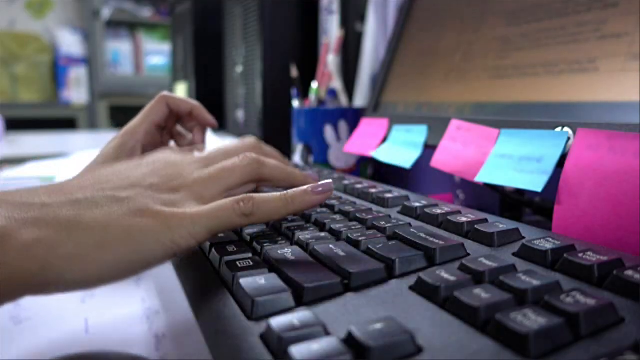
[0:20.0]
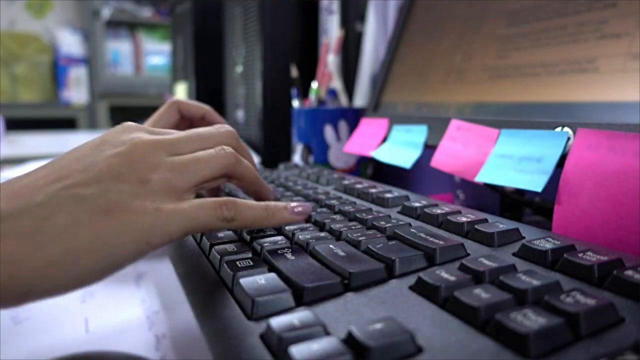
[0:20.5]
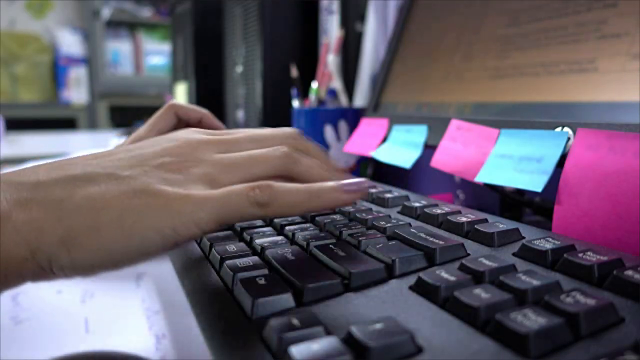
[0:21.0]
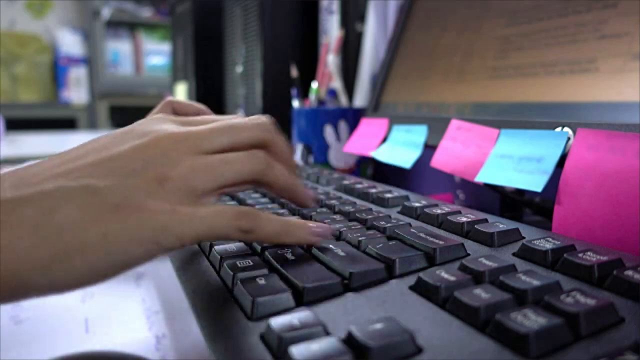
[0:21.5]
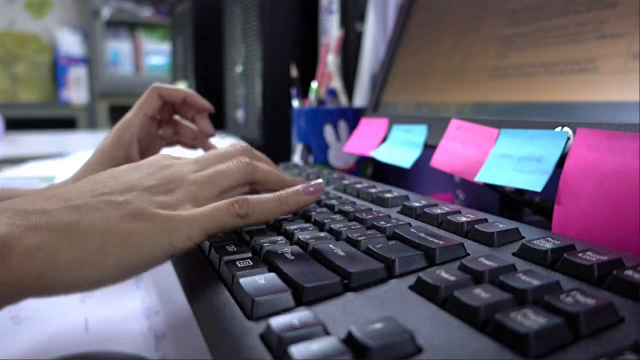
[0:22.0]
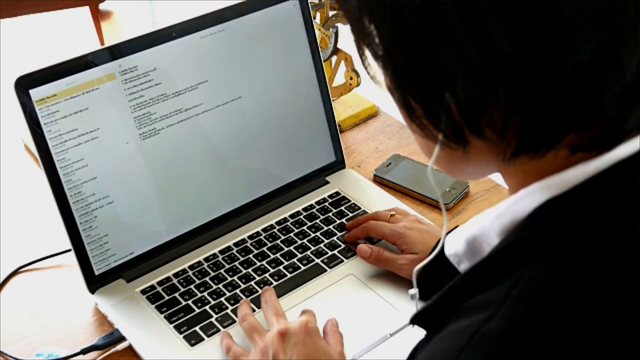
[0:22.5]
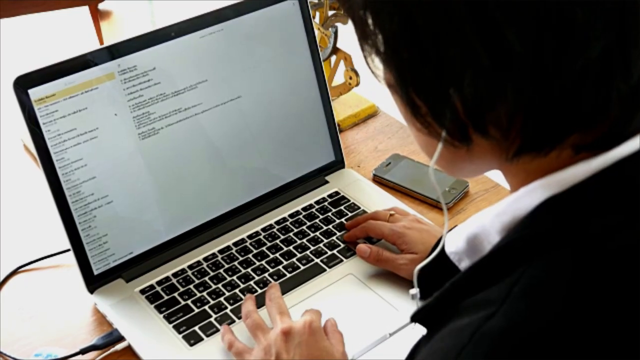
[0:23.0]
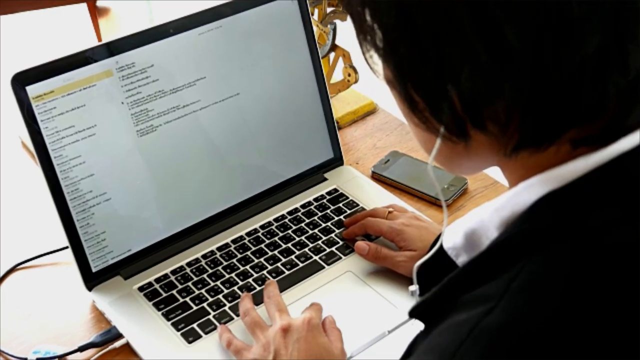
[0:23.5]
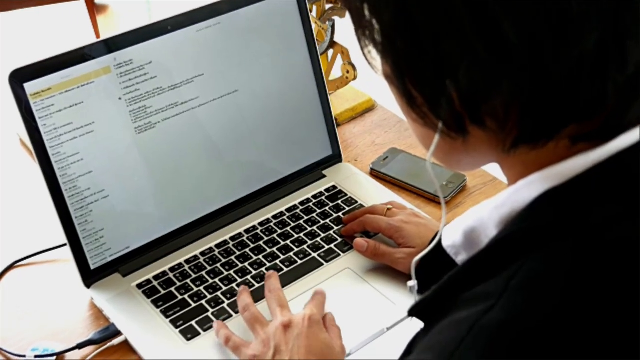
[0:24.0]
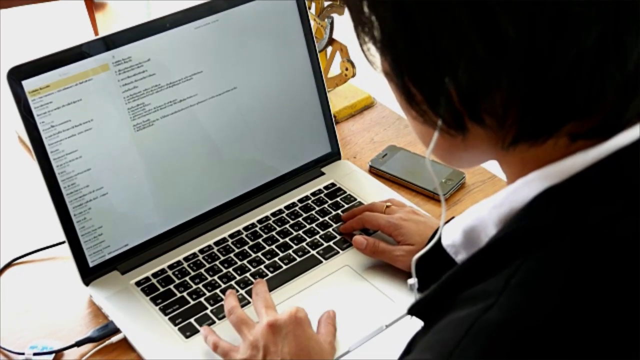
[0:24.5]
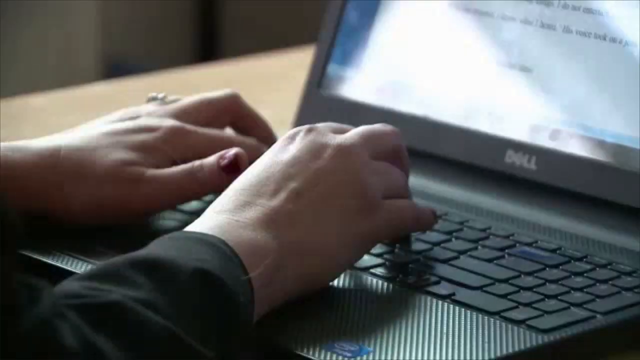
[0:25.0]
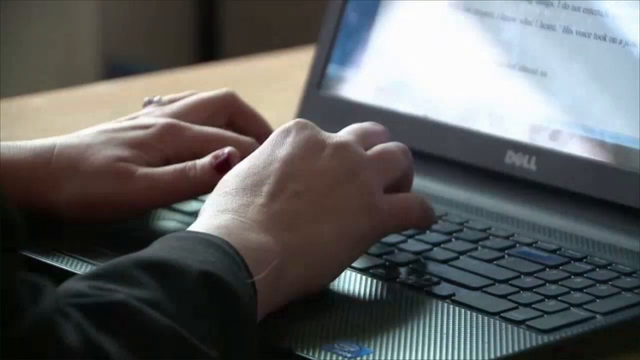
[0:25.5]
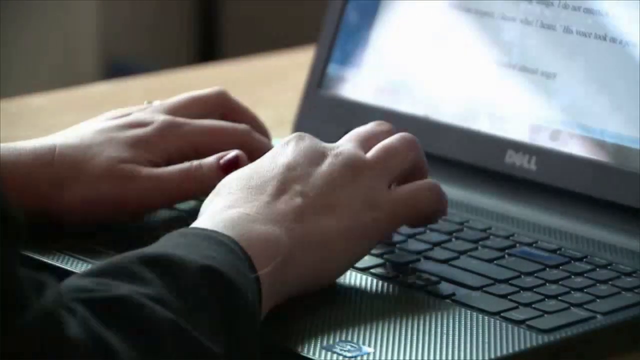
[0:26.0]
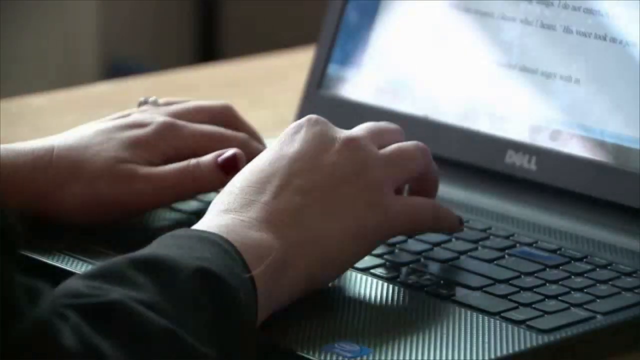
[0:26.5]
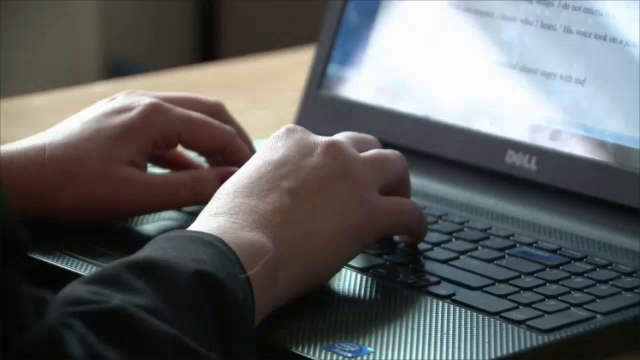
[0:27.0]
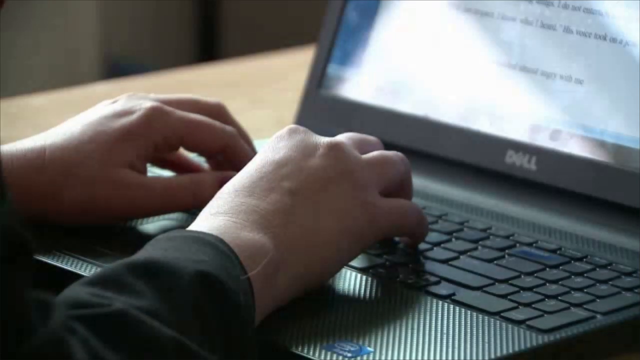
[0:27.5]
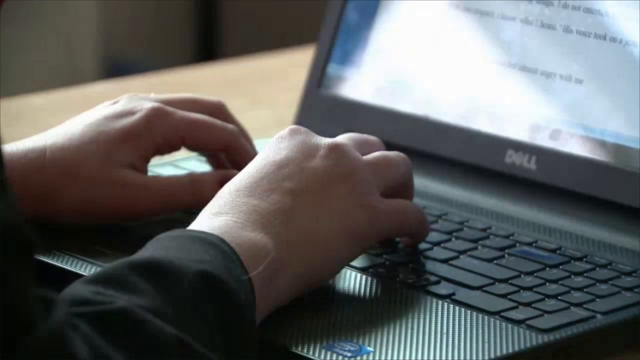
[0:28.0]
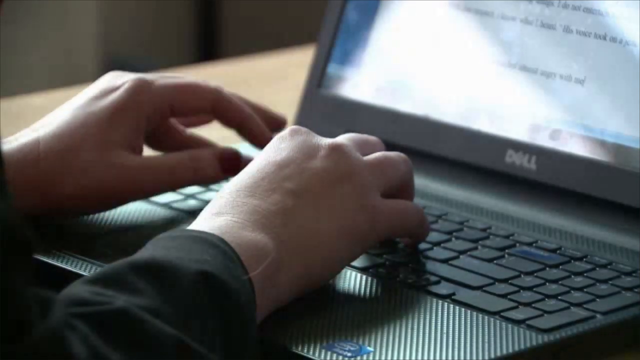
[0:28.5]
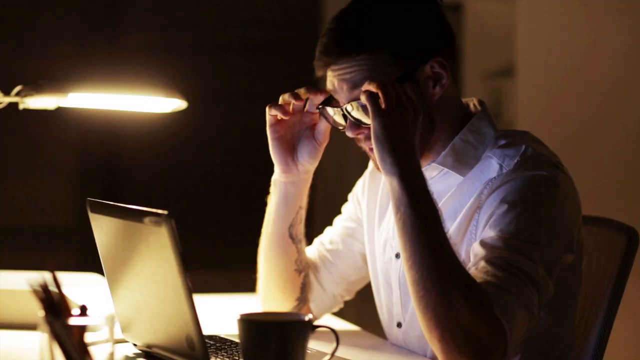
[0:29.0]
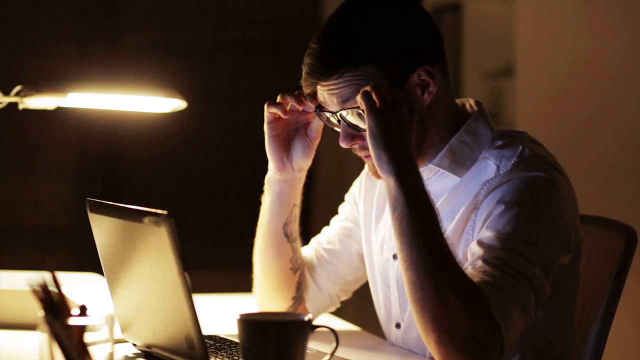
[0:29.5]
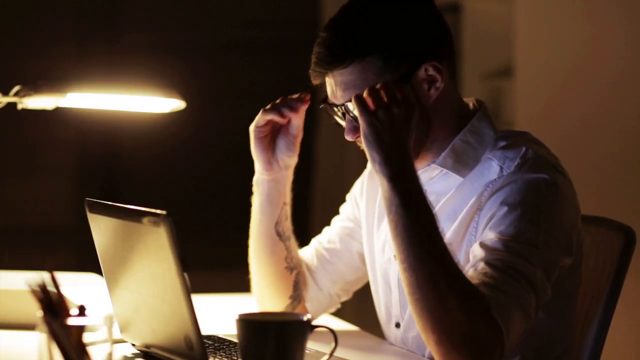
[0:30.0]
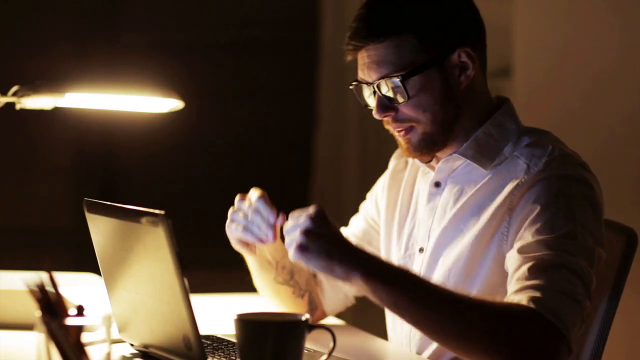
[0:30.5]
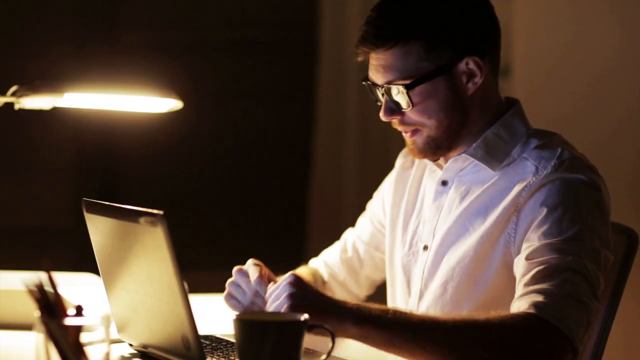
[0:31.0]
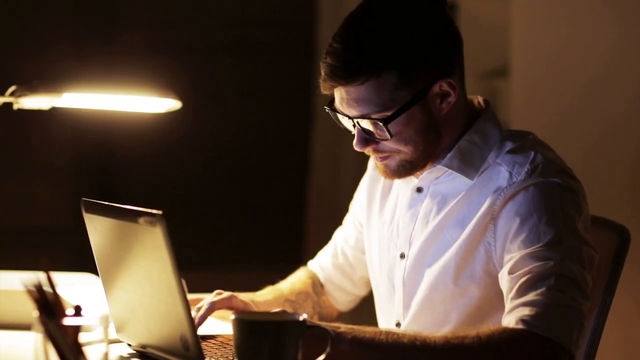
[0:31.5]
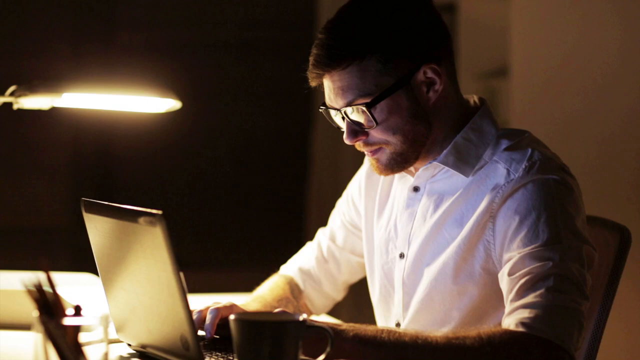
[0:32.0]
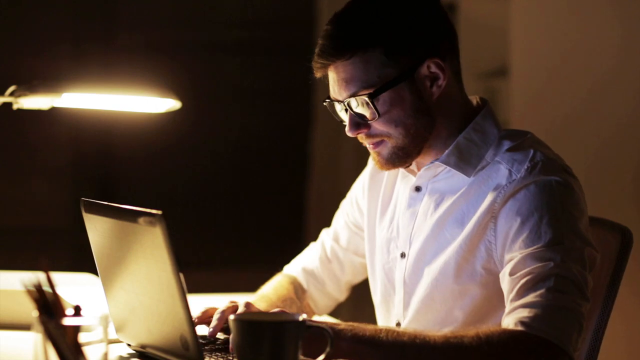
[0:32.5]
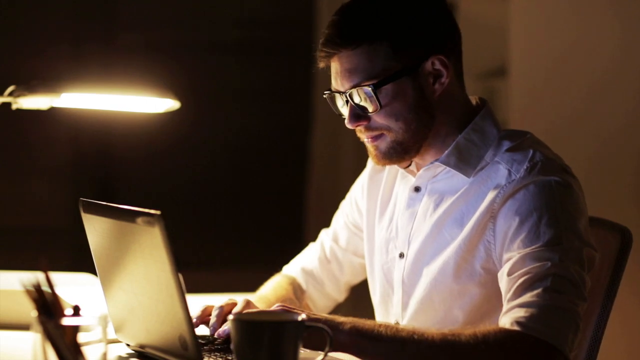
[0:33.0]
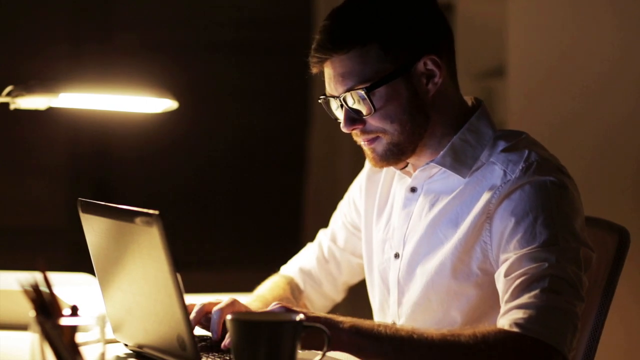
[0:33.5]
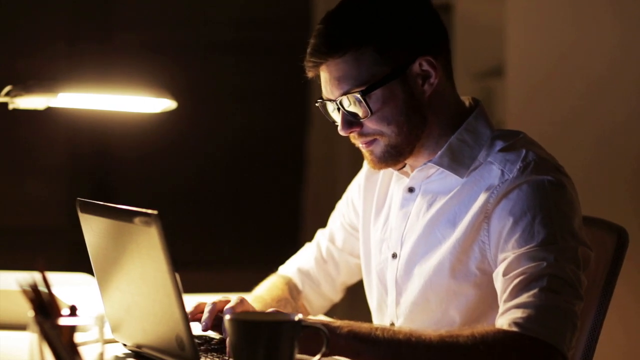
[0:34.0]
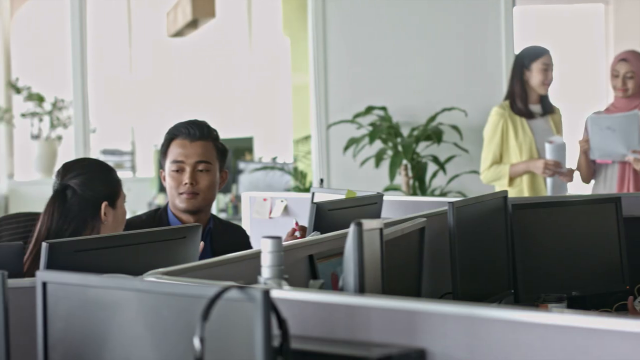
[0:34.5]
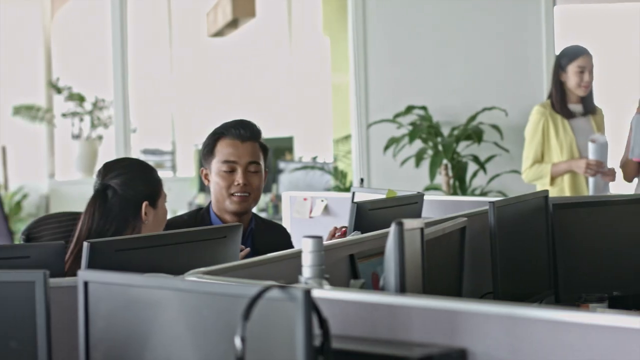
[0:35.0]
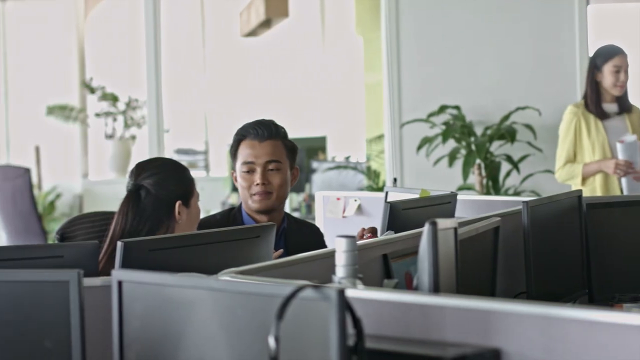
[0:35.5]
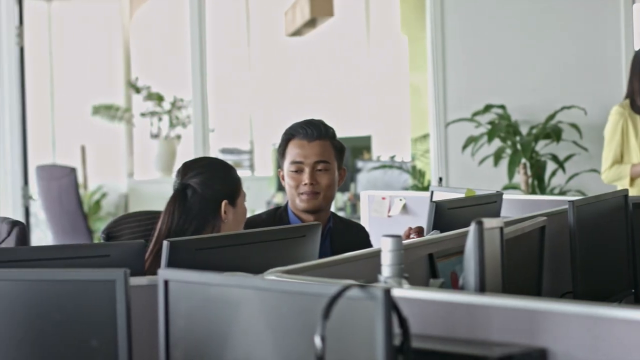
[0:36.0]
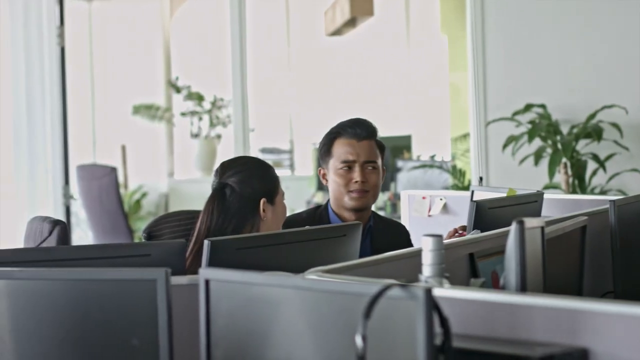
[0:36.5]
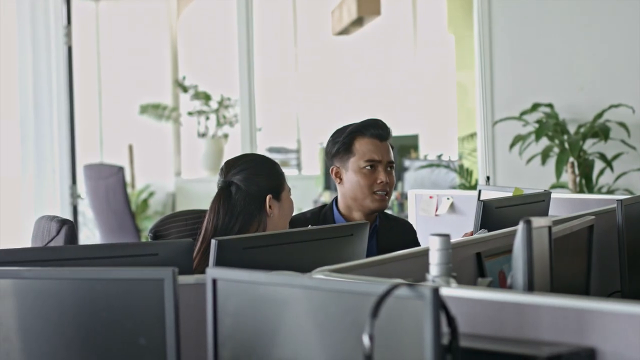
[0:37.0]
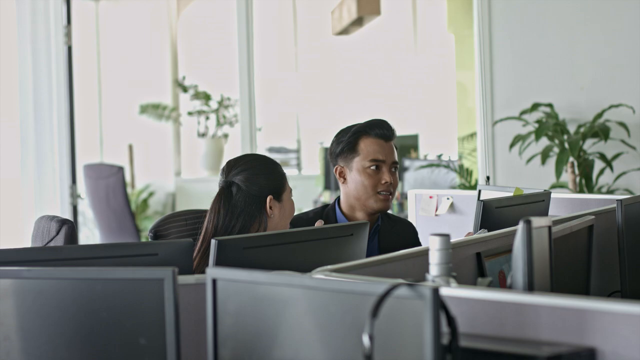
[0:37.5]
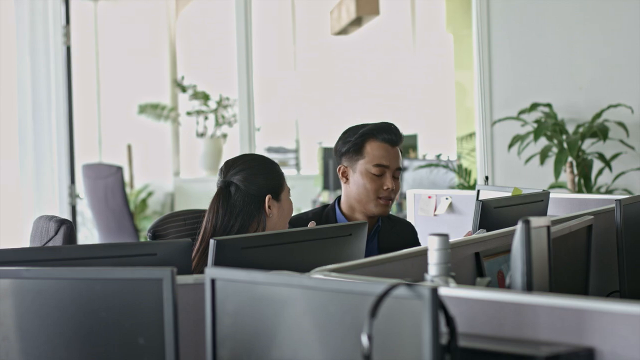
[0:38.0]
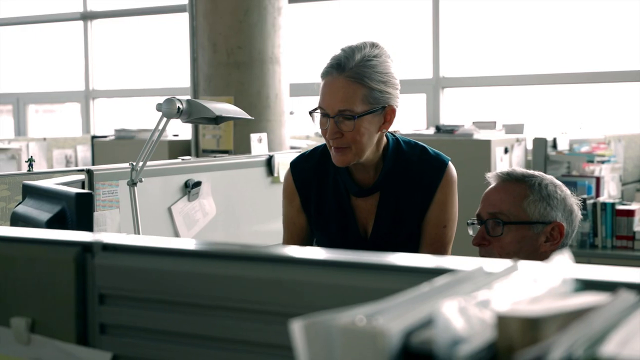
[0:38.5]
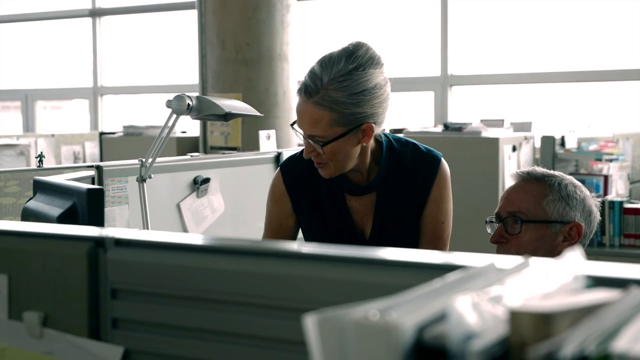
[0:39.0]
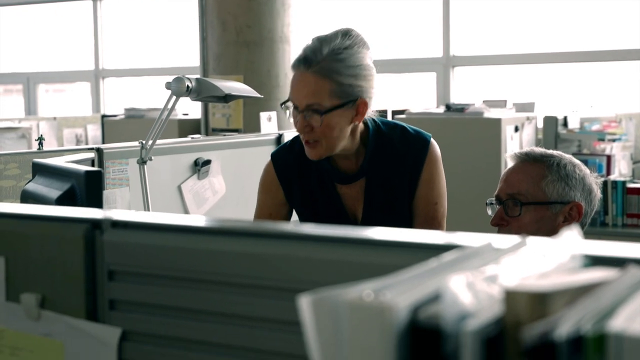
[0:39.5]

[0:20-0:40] Behind the keyboard are some pink and blue sticky notes. A monitor is visible, and behind the monitor is a blue cup with some pens in it. The rest of the background is very blurry, but some cabinets can be made out. The next scene shows another person, seemingly a male, whose left arm is interacting with the mouse pad while he wears headphones with dangling wires. He wears a black suit with a white shirt buttoned open, and an older-style iPhone in a black phone case is on a wooden table. Next, another person is writing on a laptop screen, followed by a Caucasian person with a beard and glasses sitting in front of a computer screen. Then an office space shows three people talking. After that, more cubicle office spaces appear, with two older people talking, a woman and a man, both wearing glasses, with some papers and files in the background.